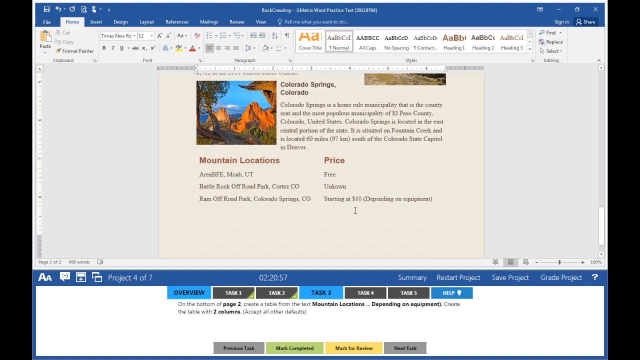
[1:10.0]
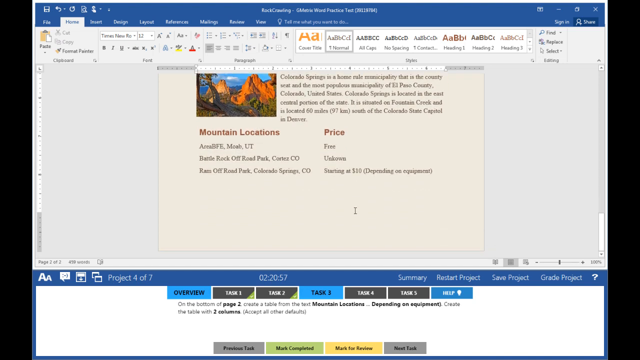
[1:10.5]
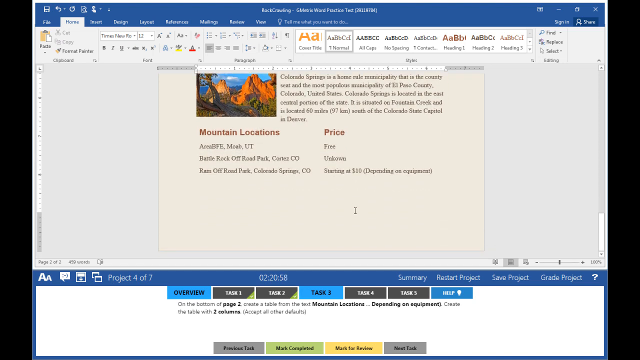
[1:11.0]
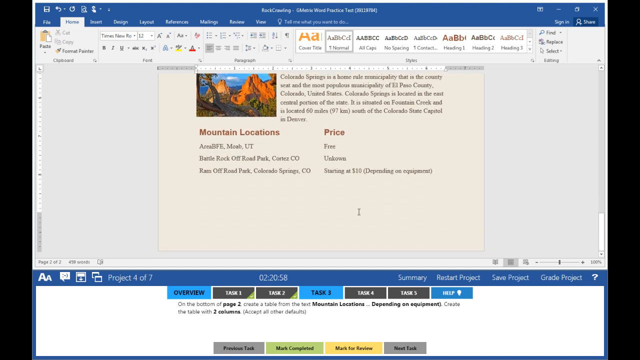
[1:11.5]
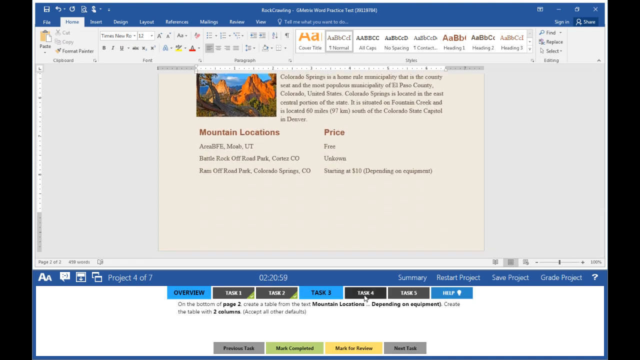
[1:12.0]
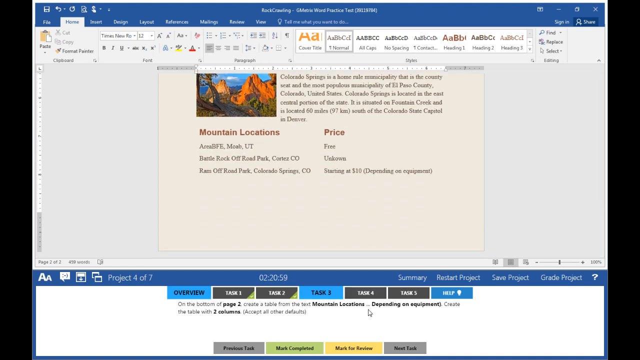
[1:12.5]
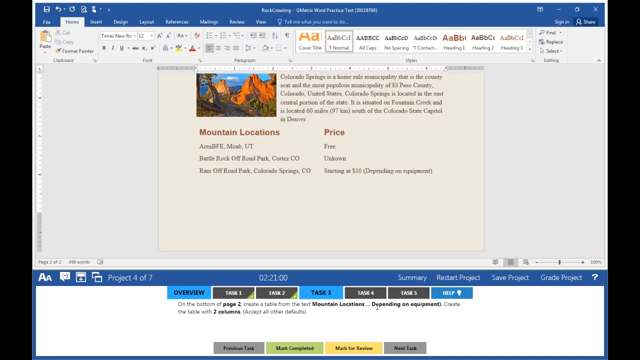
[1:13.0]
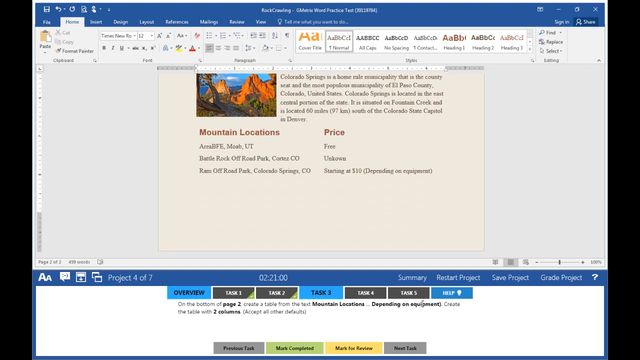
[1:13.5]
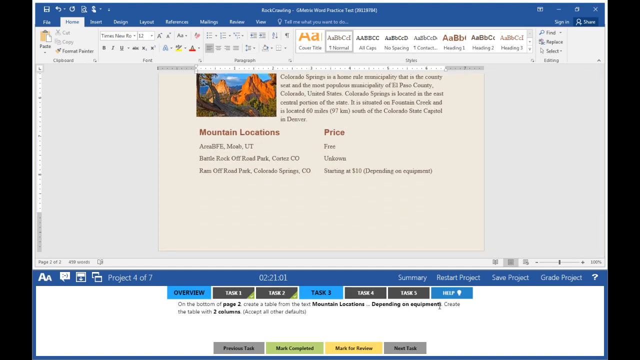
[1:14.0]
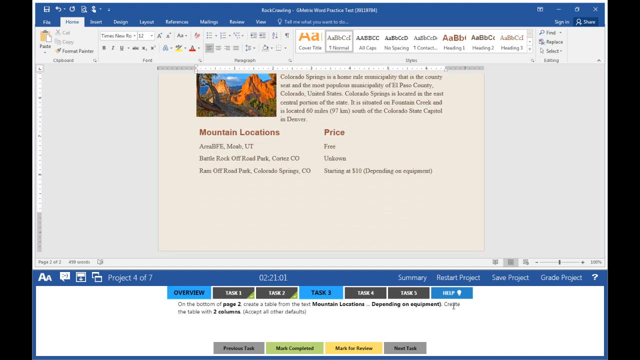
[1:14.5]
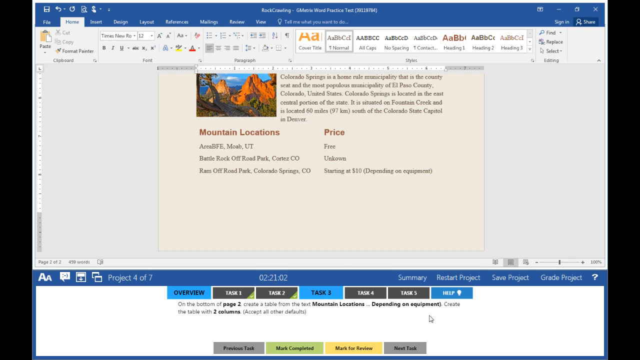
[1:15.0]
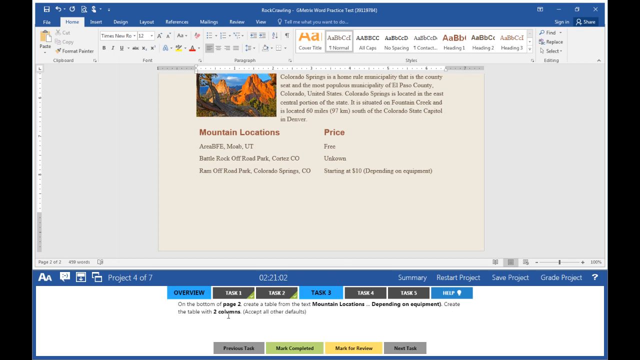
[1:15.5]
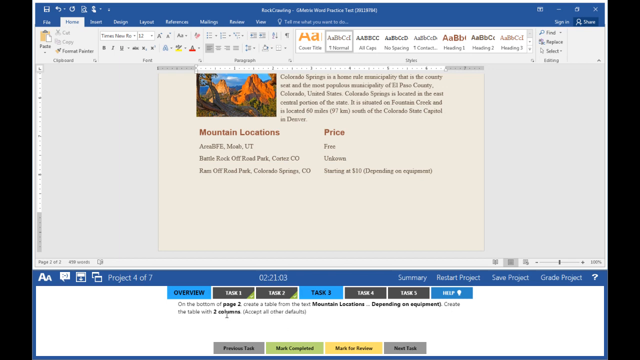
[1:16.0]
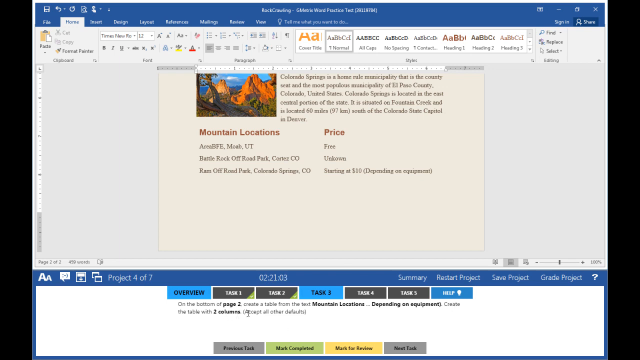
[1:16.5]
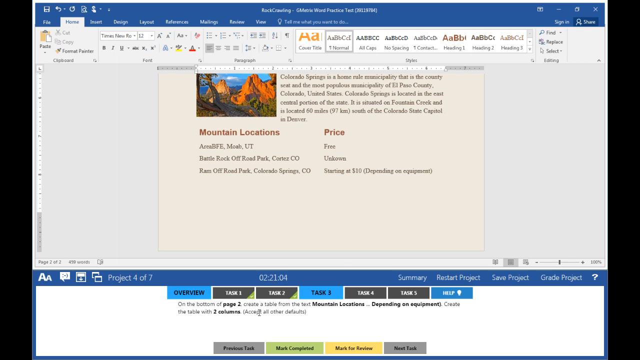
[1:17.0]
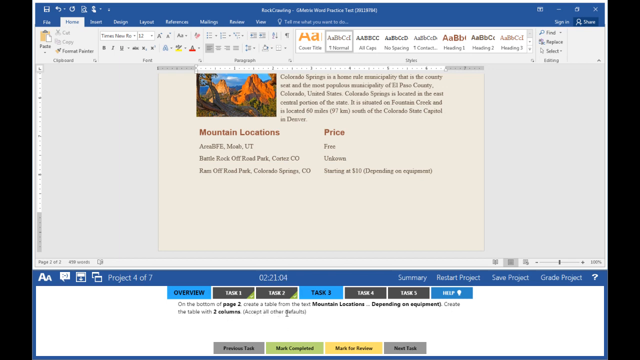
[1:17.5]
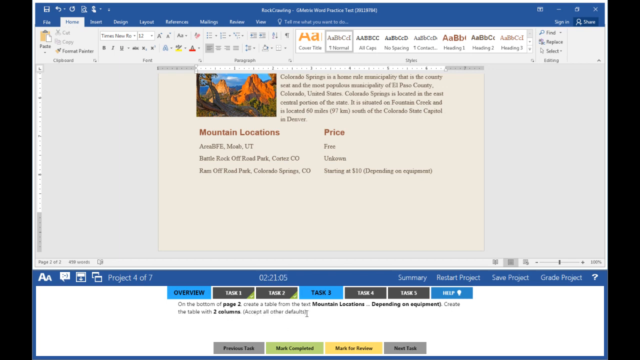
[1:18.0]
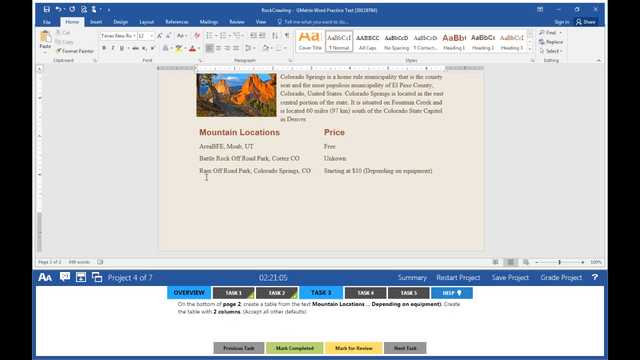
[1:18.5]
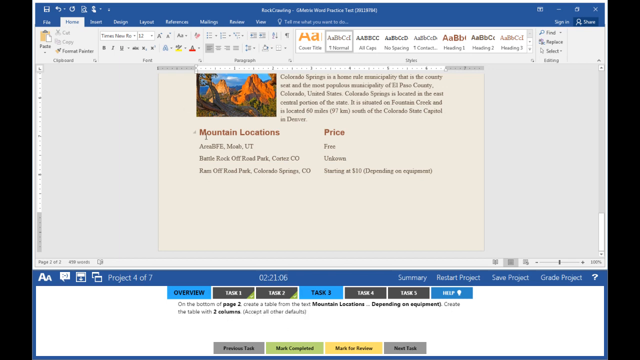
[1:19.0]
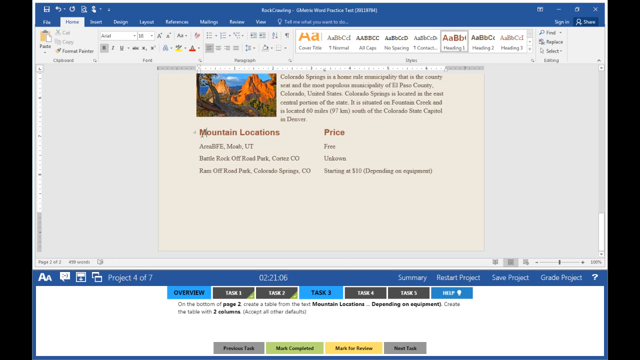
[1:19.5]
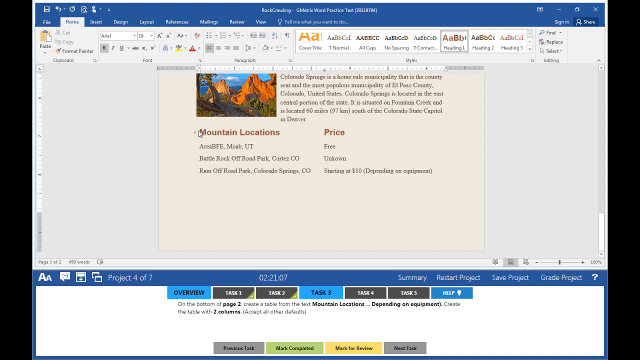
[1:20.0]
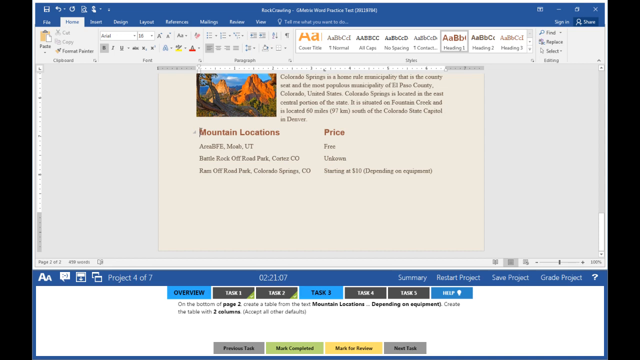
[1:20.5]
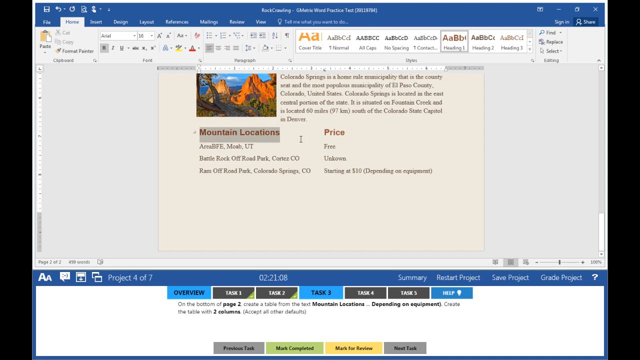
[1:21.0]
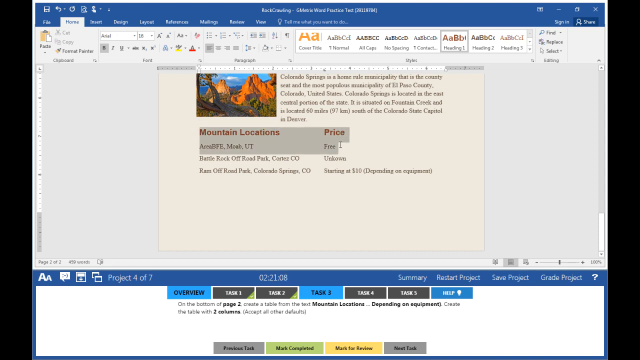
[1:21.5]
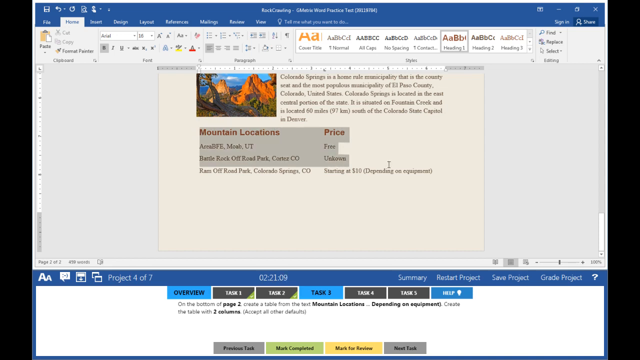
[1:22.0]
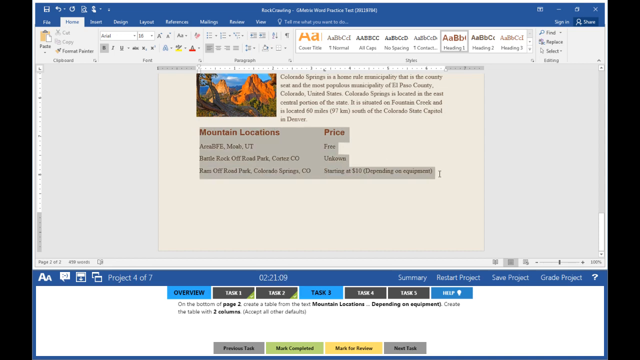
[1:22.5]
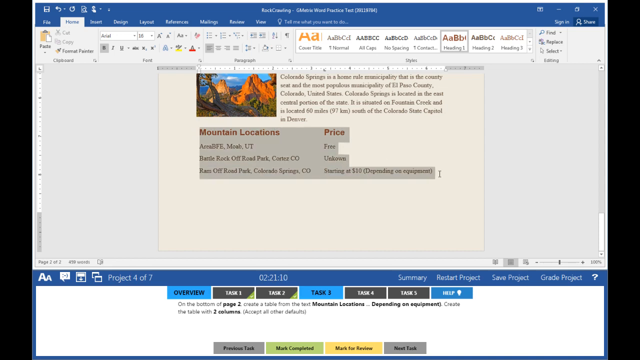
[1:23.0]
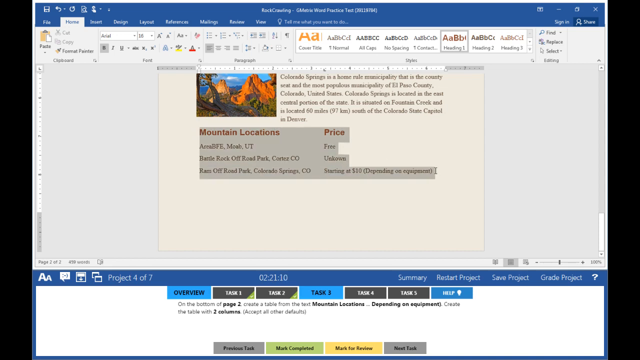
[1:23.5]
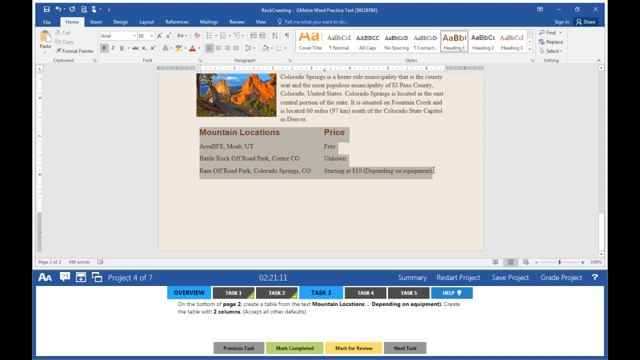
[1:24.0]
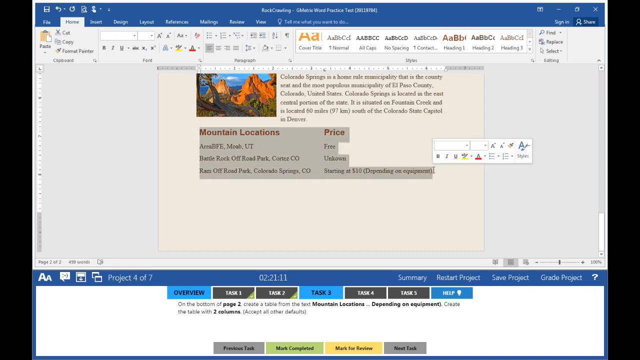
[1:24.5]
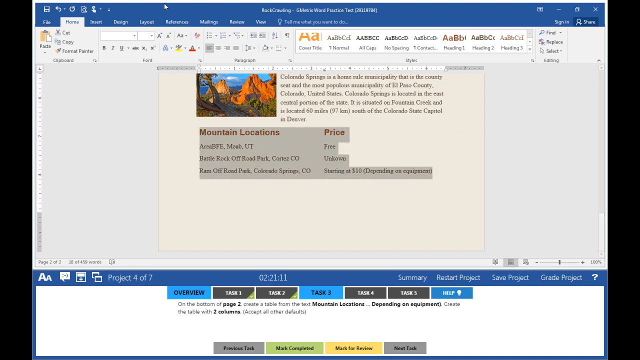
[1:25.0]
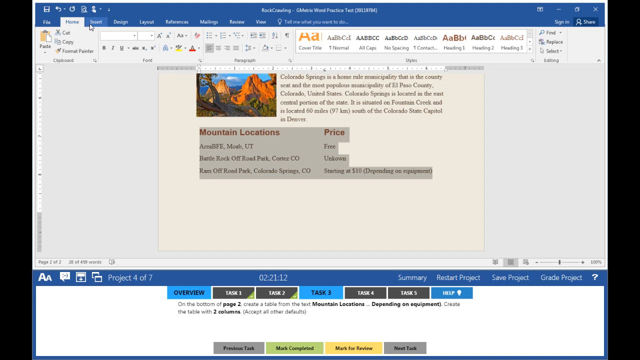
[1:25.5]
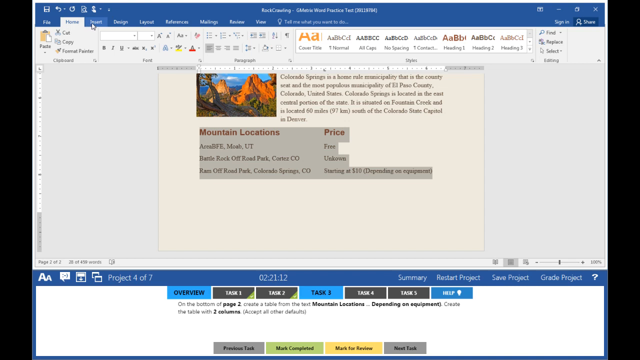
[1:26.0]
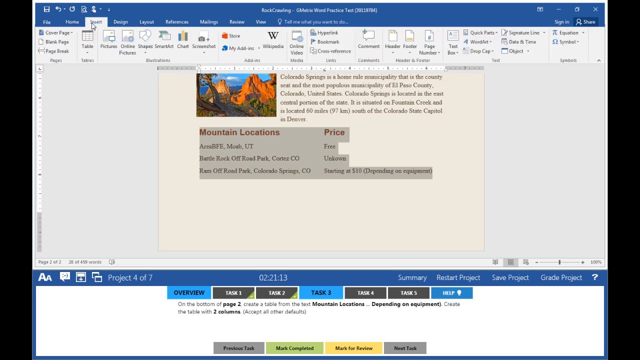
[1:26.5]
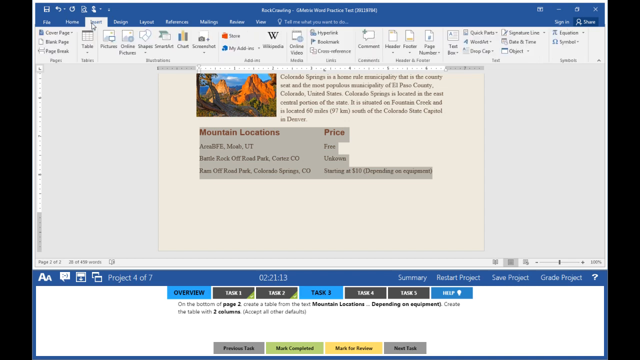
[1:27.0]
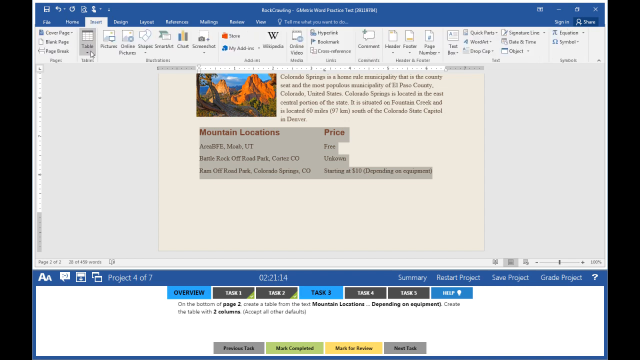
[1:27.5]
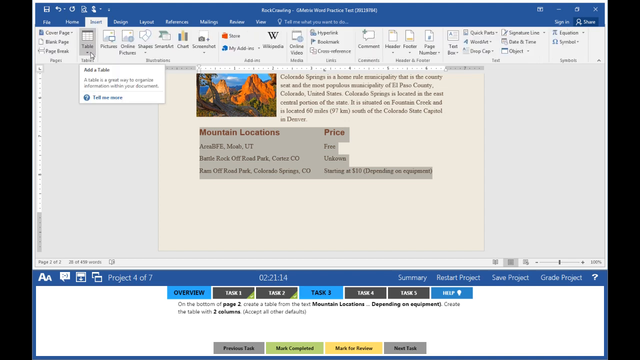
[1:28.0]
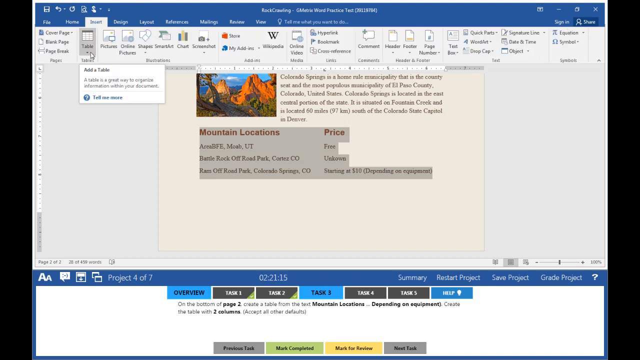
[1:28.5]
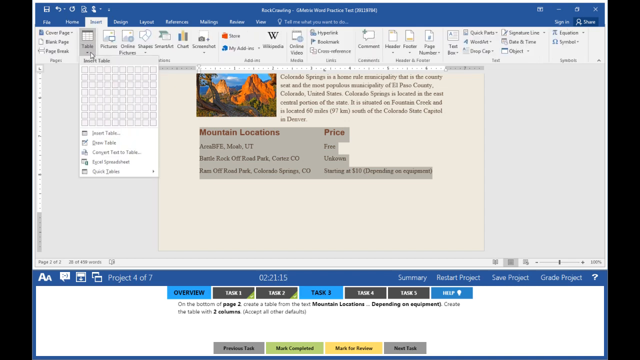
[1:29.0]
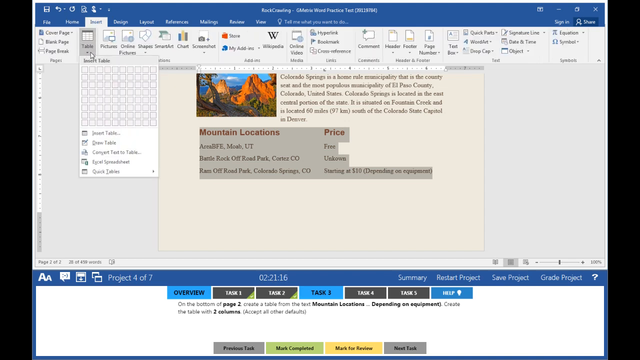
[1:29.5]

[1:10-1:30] The person appears to be taking a test on the computer in Microsoft Word, using a travel document about what to do in Moab or in Colorado, including rock crawling with four-by-fours in Moab. Tasks are at the bottom, and they are on task three. The cursor goes down to the bottom, where they seem to be reading directions about creating a table of two columns. They highlight some of the information about Colorado Springs and Cortez, then go over to Home and appear to click something very quickly. They are inserting a table, though where it will go is not shown.